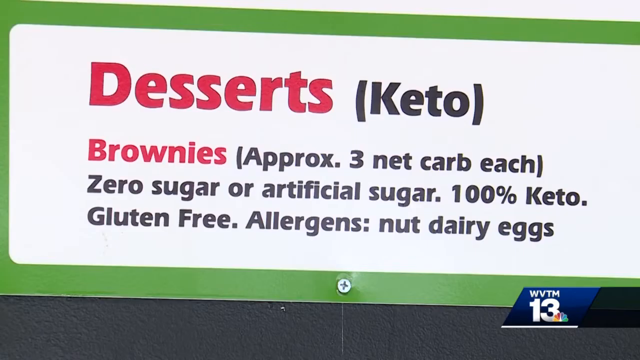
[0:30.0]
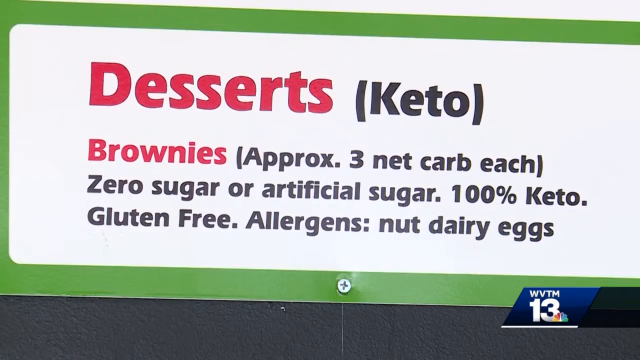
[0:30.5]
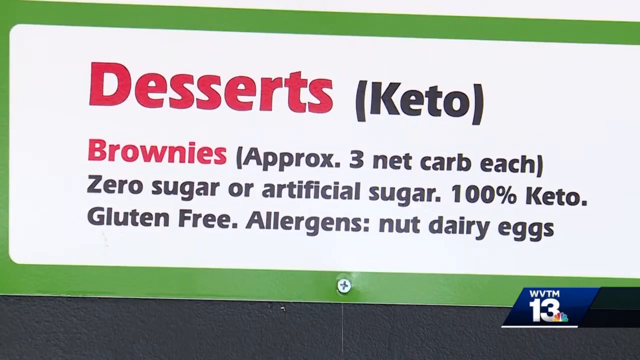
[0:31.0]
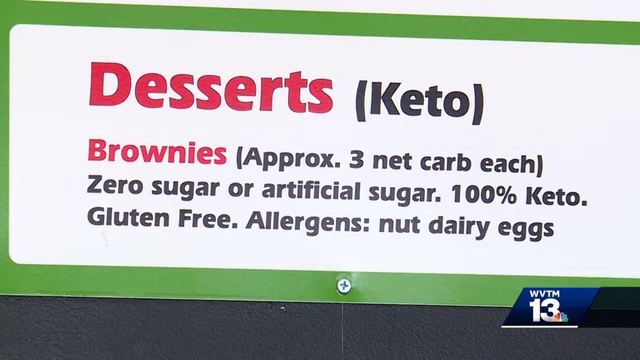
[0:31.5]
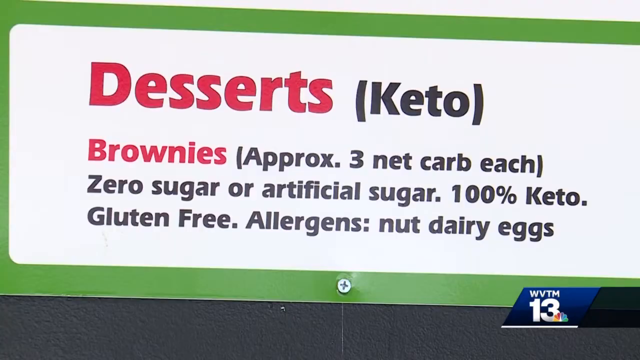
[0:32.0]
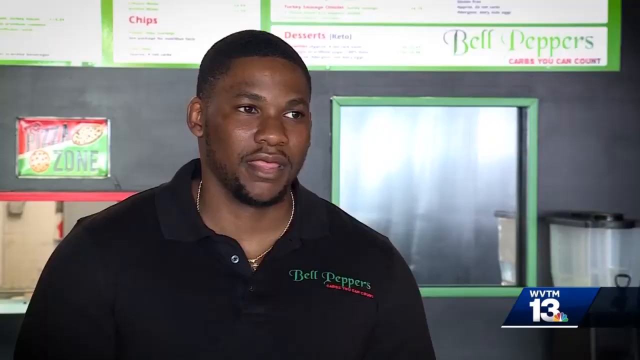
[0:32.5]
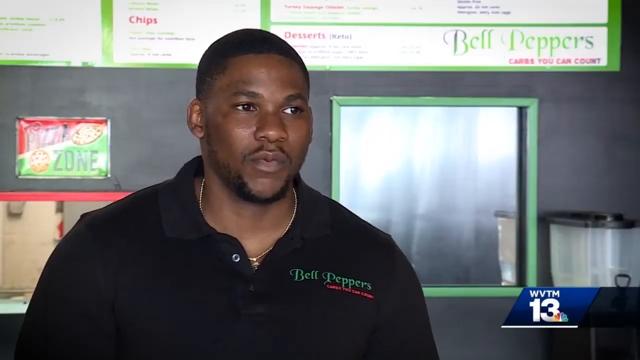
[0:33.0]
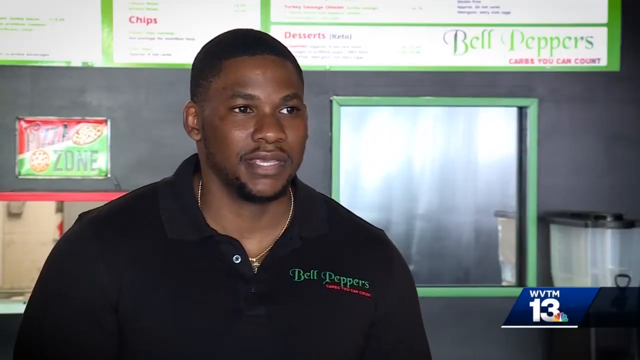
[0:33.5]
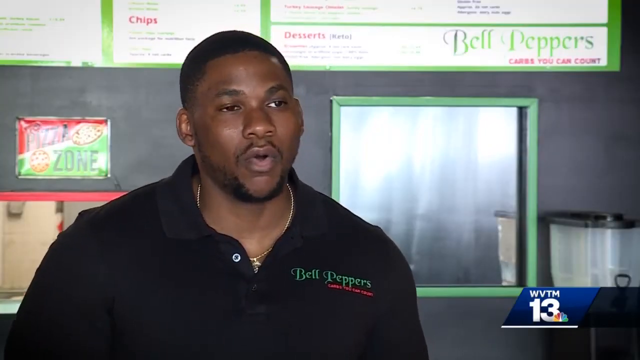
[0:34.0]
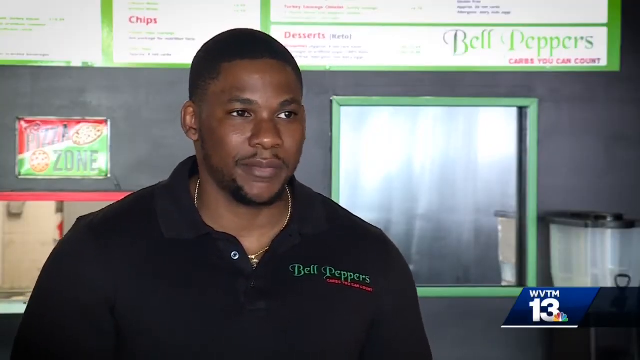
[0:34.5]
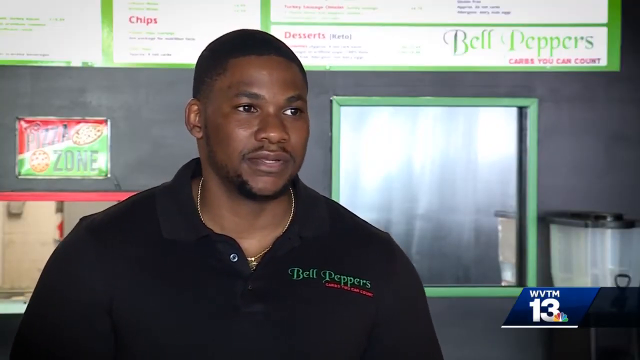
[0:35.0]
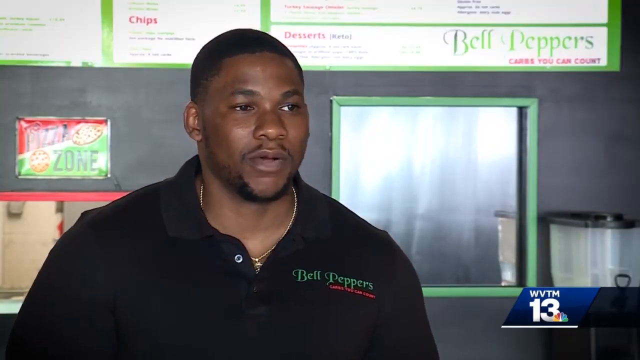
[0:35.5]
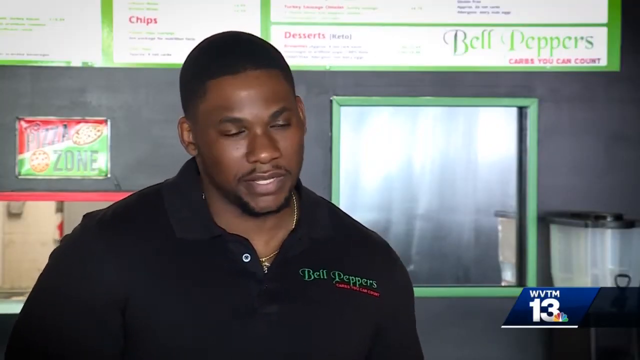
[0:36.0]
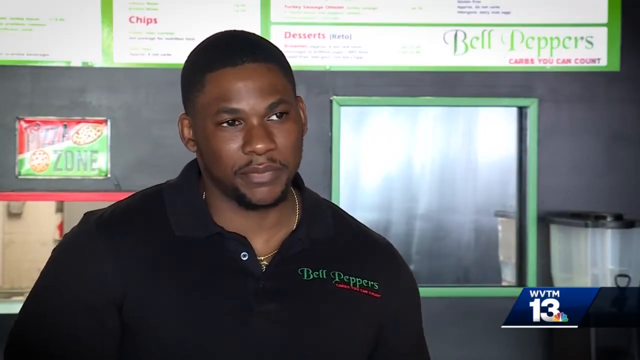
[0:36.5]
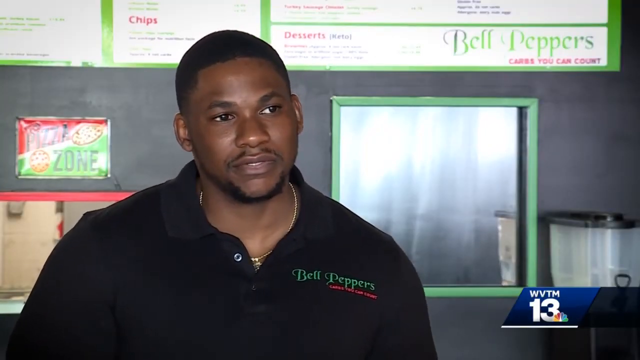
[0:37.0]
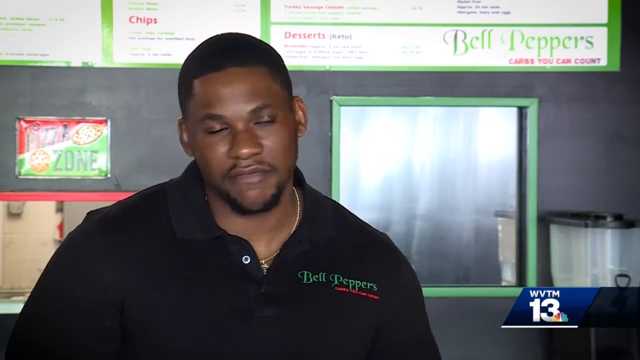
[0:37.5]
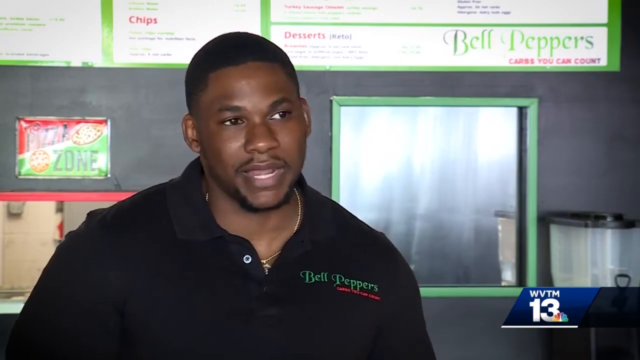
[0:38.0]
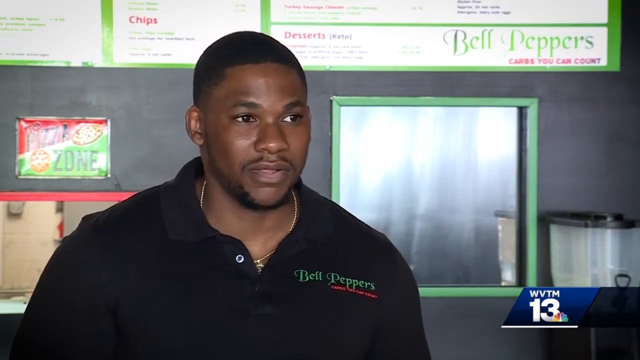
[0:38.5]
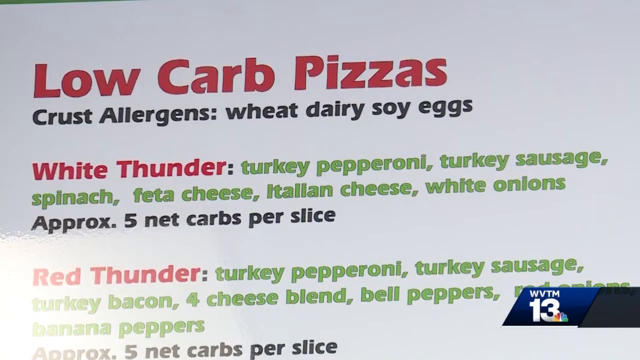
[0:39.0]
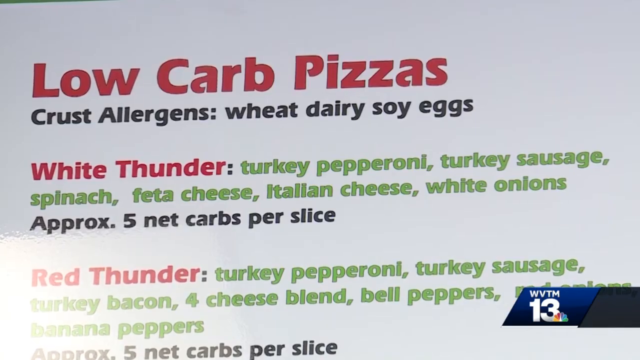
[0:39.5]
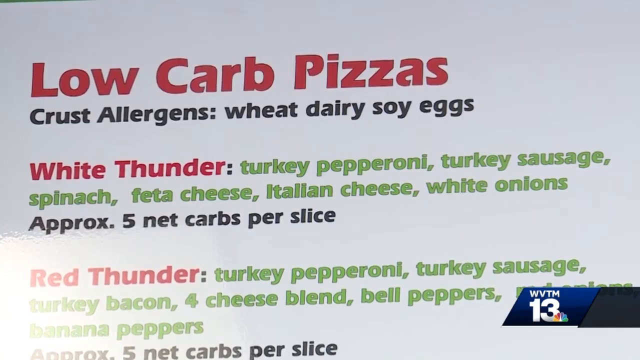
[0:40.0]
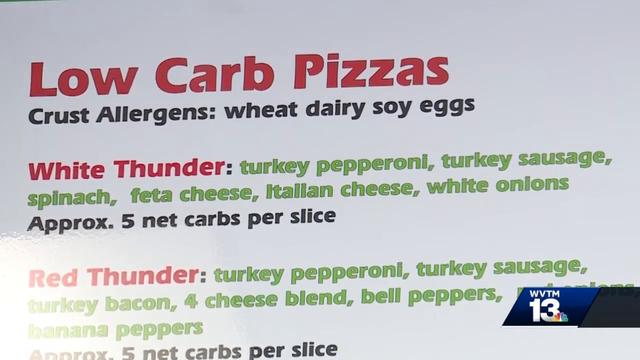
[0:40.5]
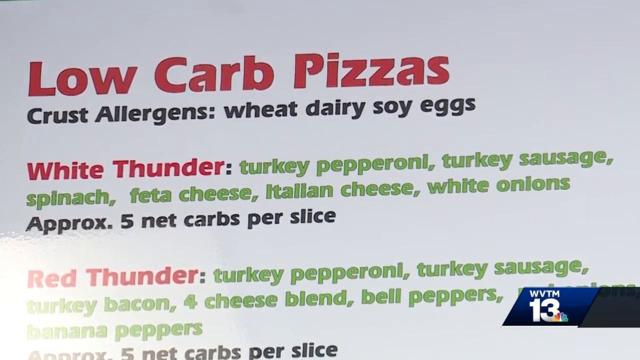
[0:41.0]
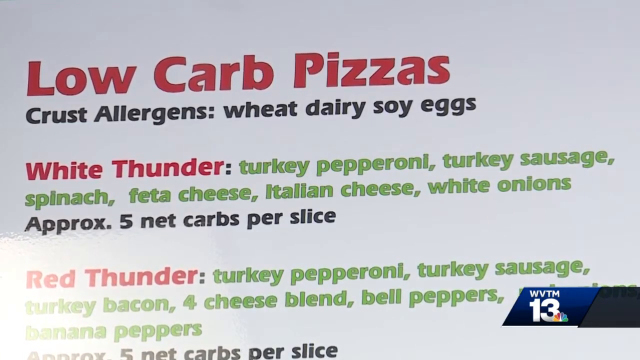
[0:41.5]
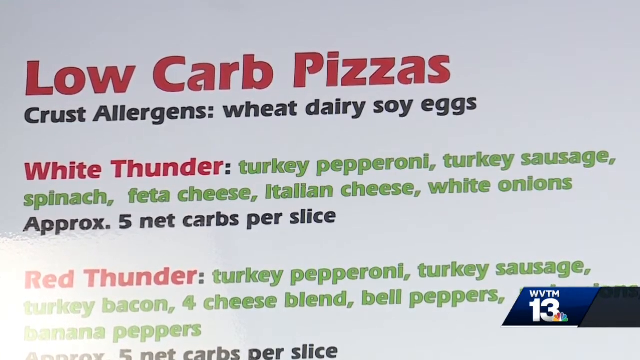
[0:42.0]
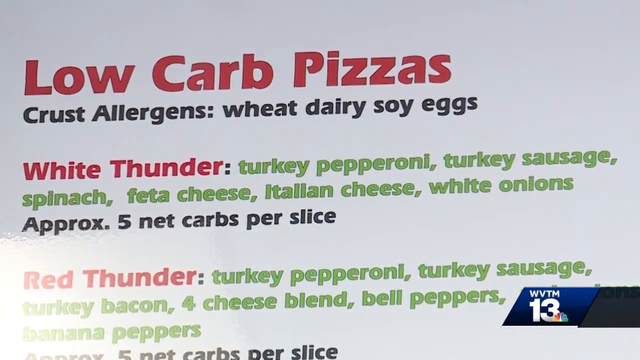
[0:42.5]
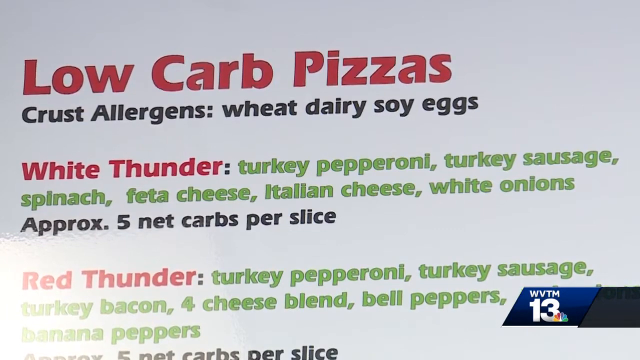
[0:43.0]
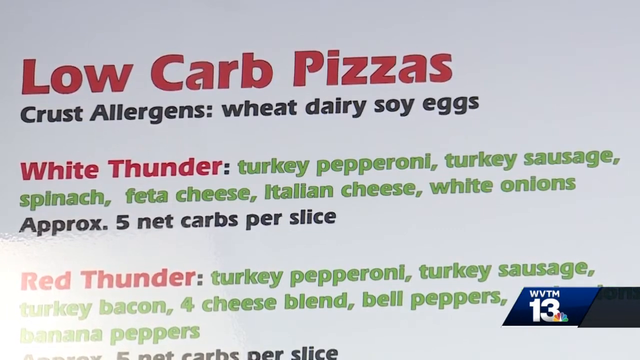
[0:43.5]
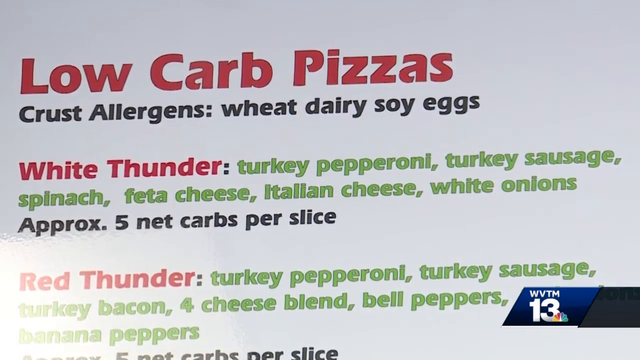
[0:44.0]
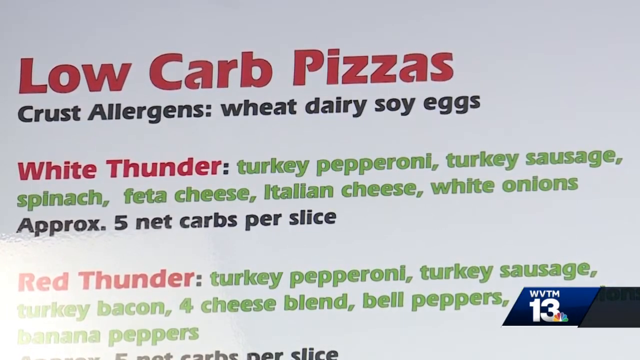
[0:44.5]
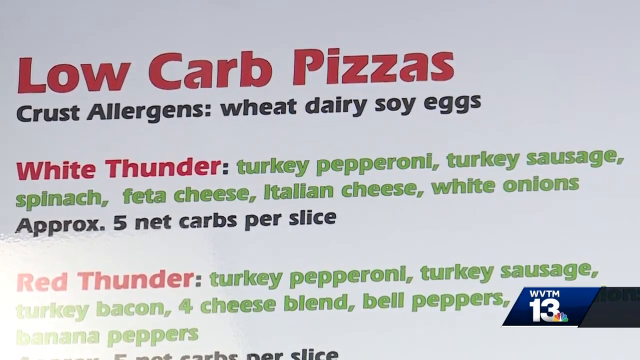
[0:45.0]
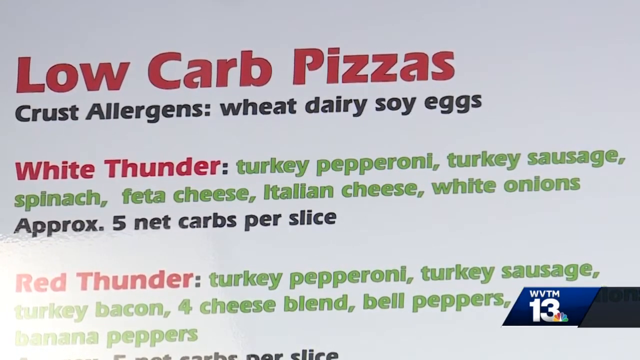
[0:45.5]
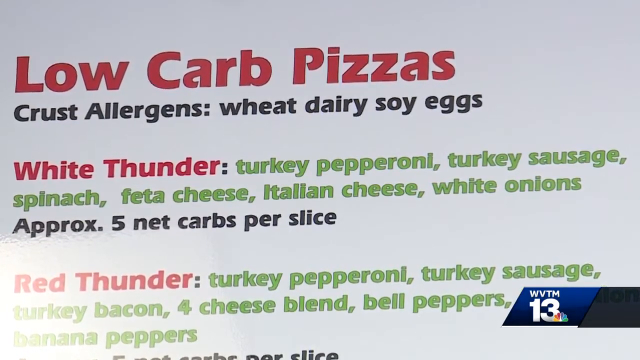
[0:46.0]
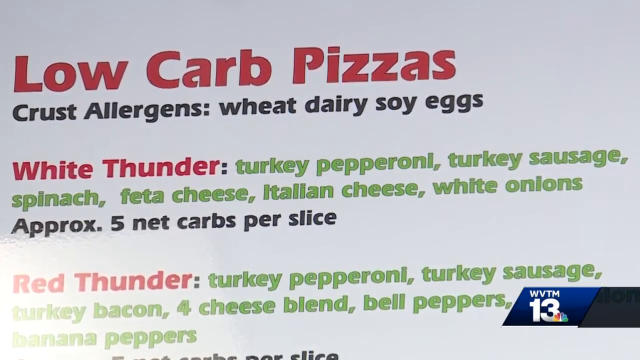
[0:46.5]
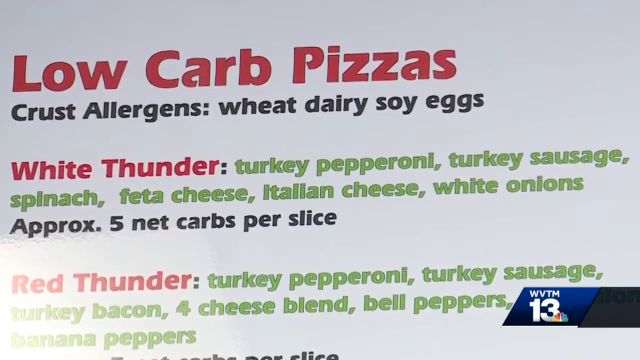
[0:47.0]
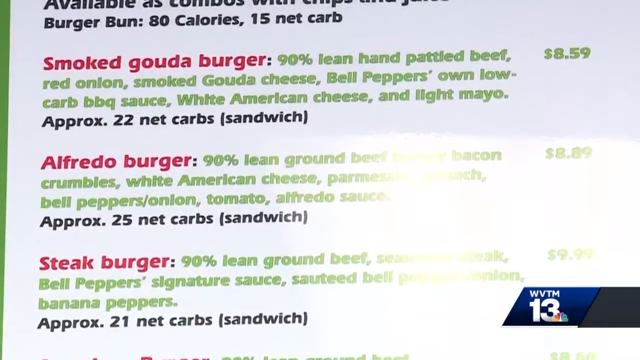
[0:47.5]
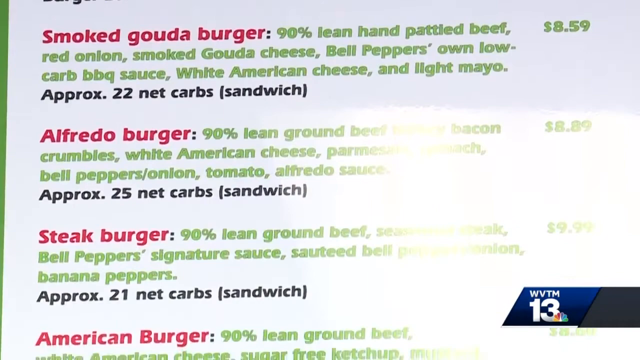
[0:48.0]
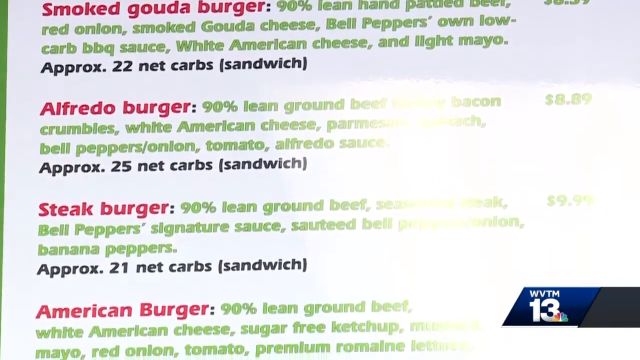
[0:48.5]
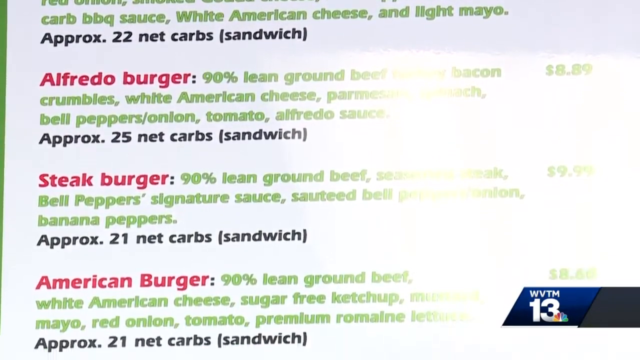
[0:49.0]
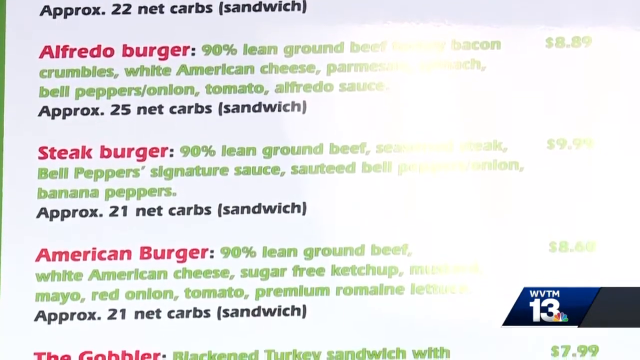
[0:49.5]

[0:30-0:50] A menu shows "desserts" in red and "keto" in black, with "brownies" in red, and the text "approximately three net carbs each, zero sugar, artificial sugar, 100% keto, gluten-free allergens, and nut dairy eggs." It also lists a low-carb pizza, "white thunder," with crust allergens wheat, dairy, soy and eggs, and toppings of turkey pepperoni, turkey sausage, spinach, feta cheese, Italian cheese and white onions, at approximately five net carbs per slice. Below it is "red thunder," a different variation of the pizza with similar ingredients.